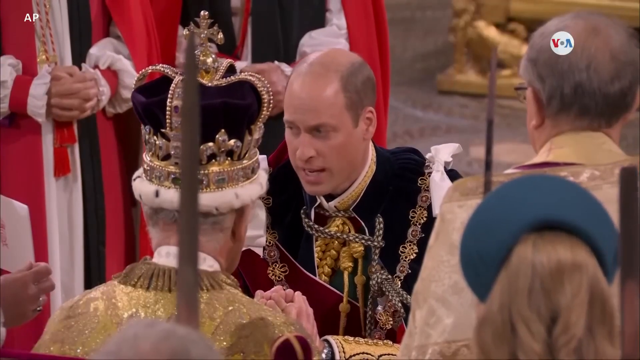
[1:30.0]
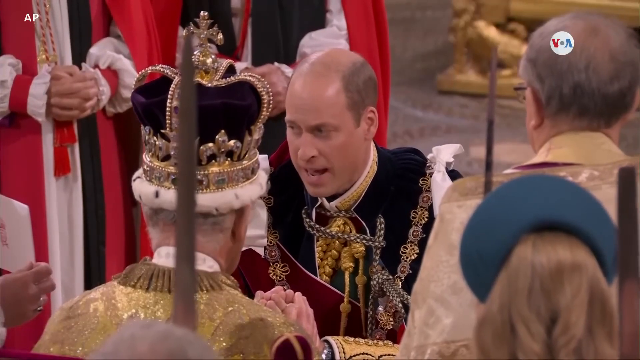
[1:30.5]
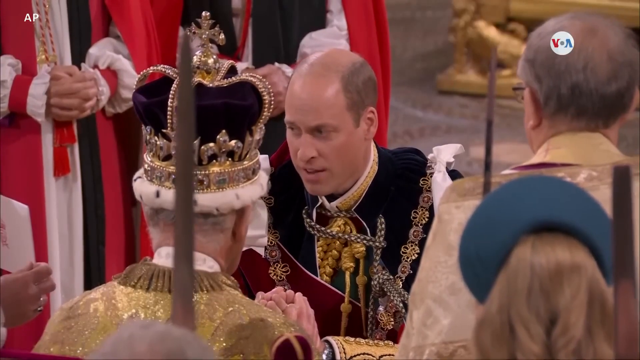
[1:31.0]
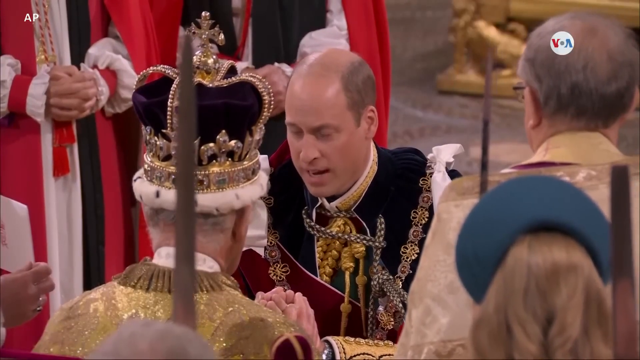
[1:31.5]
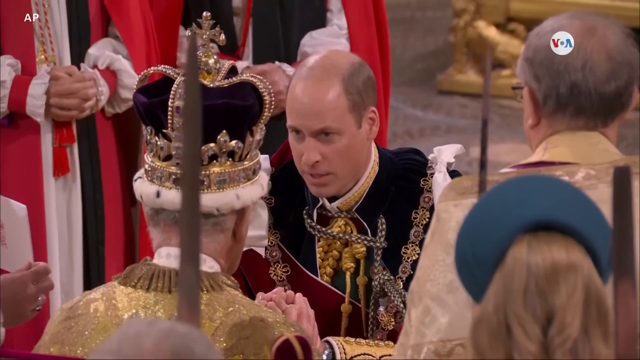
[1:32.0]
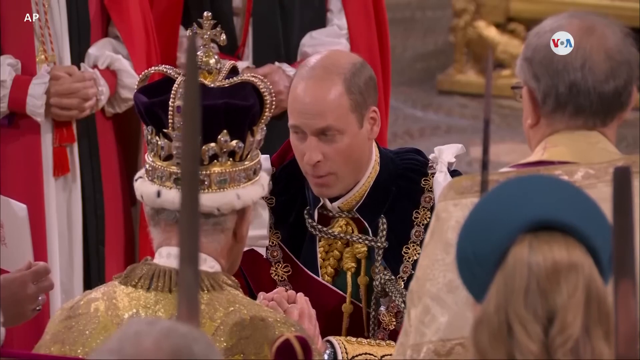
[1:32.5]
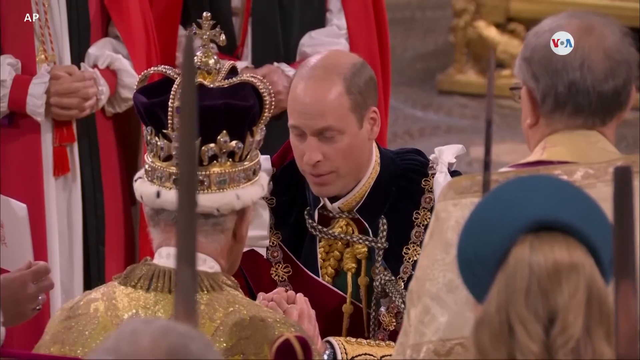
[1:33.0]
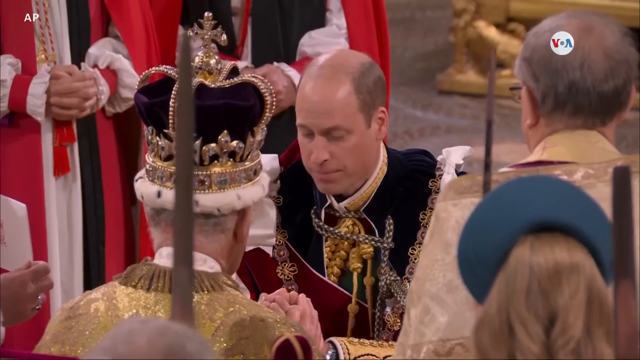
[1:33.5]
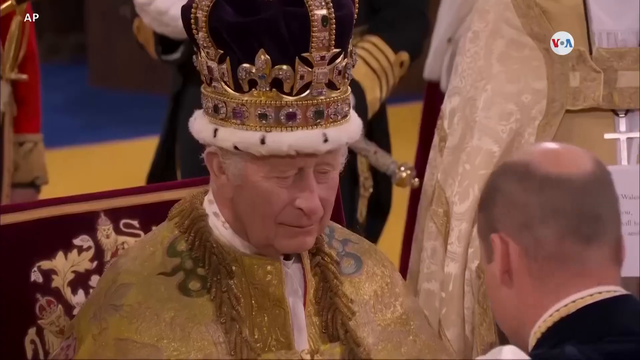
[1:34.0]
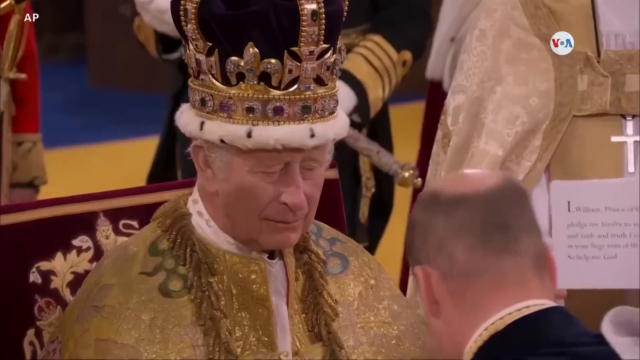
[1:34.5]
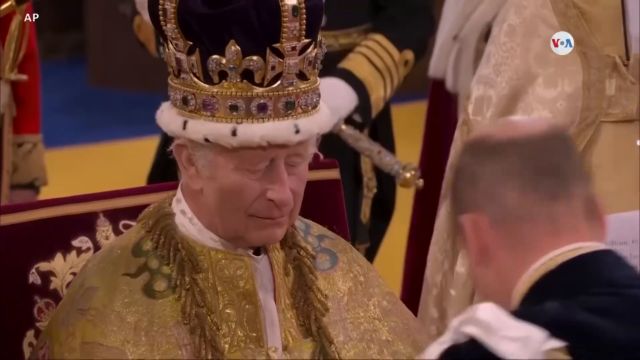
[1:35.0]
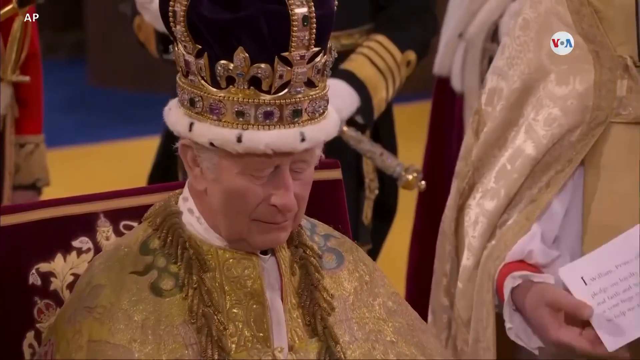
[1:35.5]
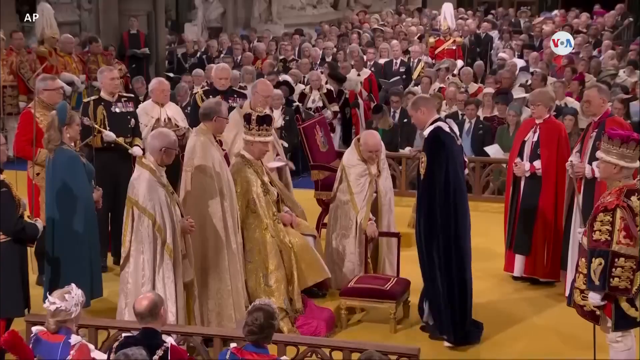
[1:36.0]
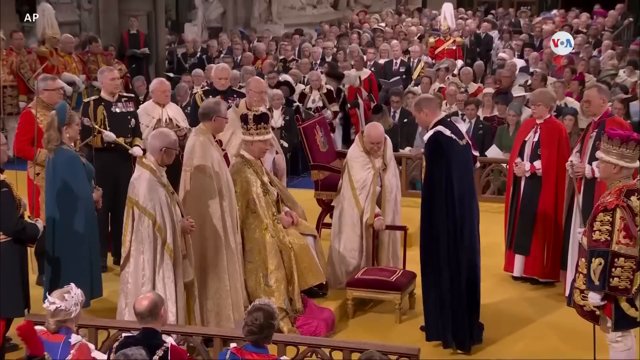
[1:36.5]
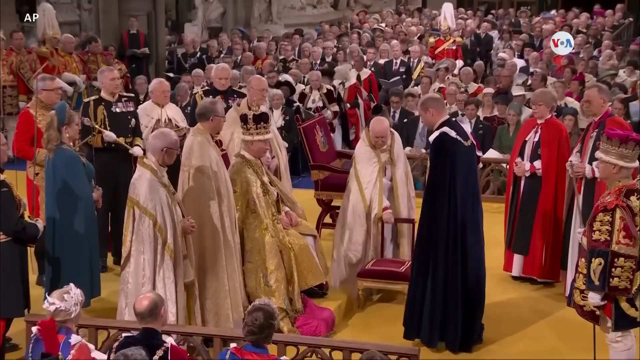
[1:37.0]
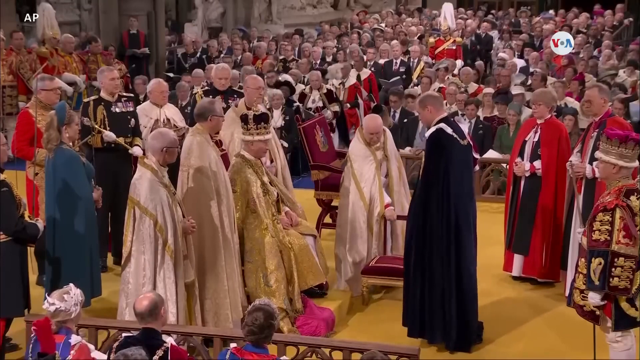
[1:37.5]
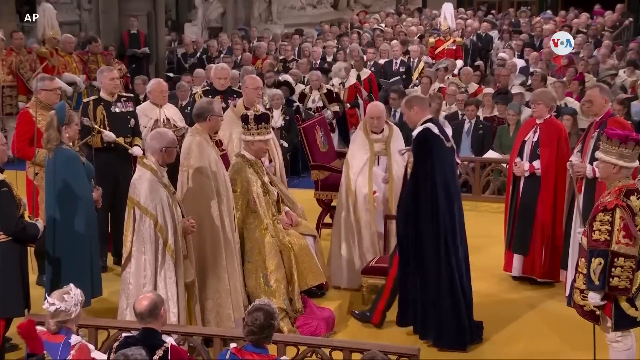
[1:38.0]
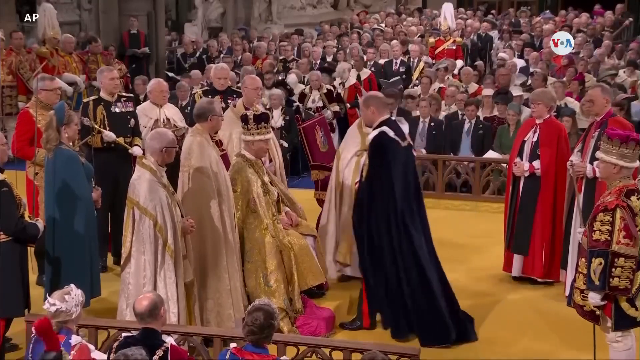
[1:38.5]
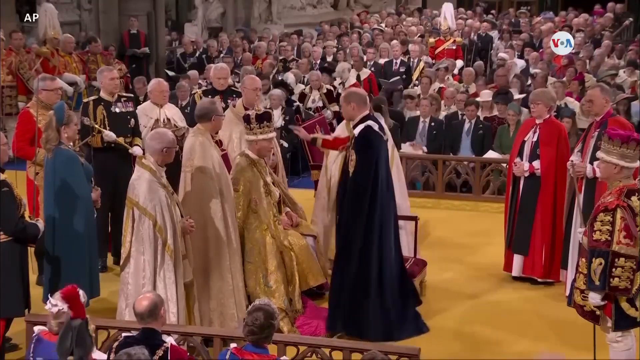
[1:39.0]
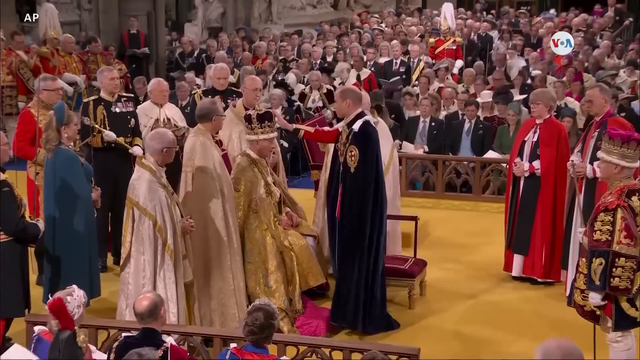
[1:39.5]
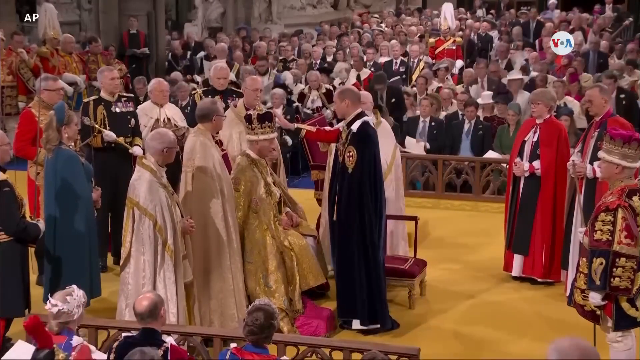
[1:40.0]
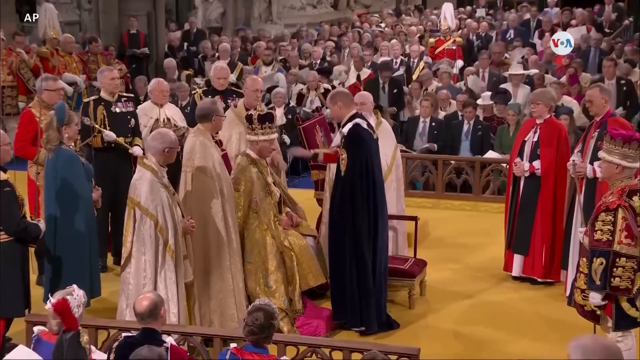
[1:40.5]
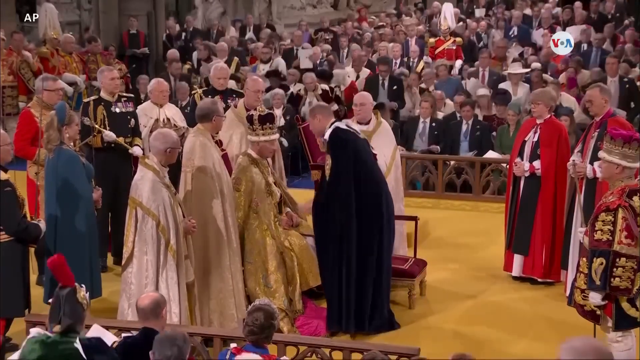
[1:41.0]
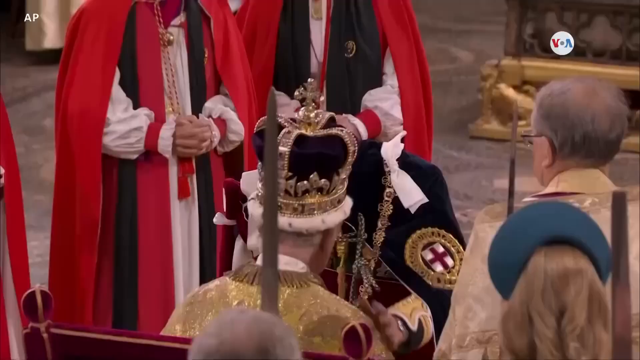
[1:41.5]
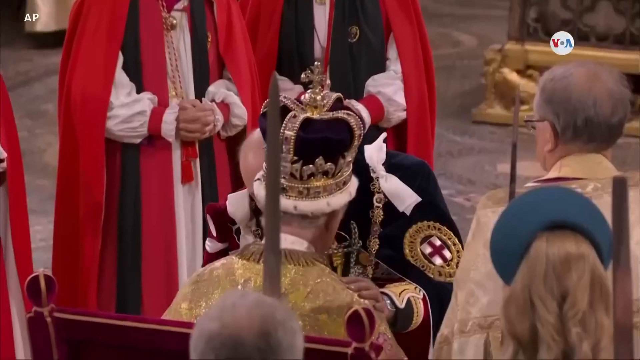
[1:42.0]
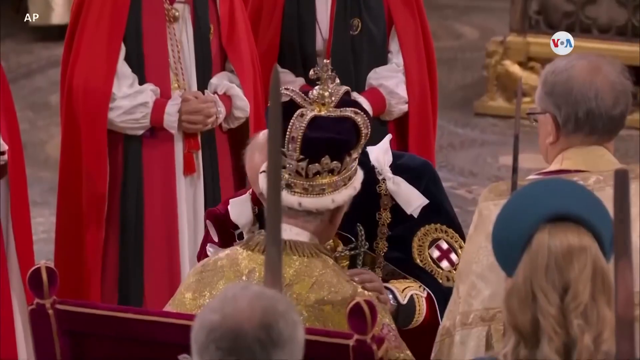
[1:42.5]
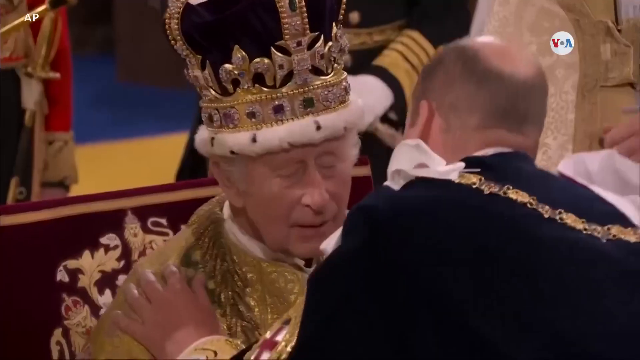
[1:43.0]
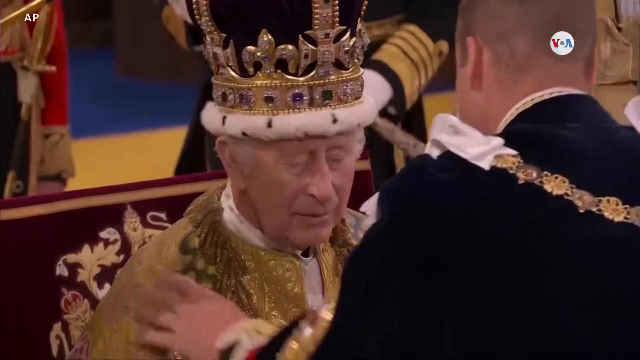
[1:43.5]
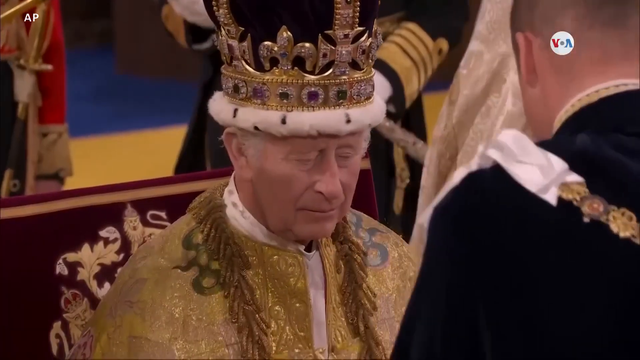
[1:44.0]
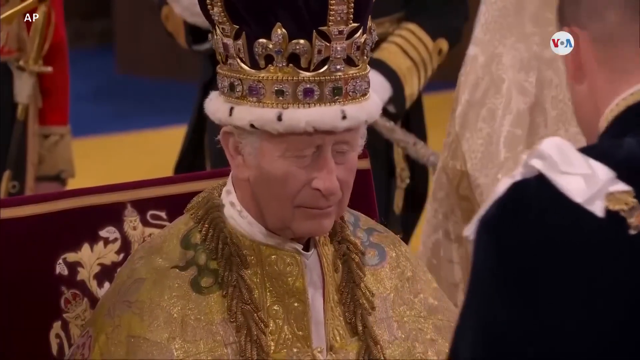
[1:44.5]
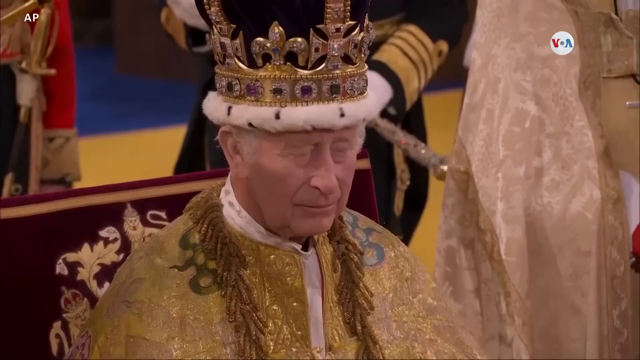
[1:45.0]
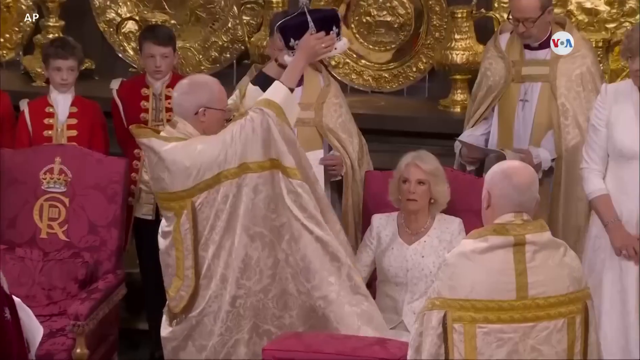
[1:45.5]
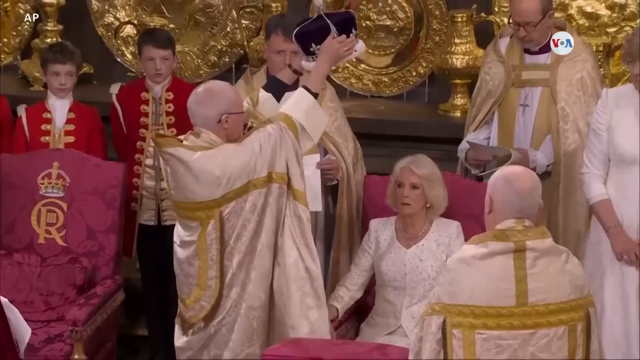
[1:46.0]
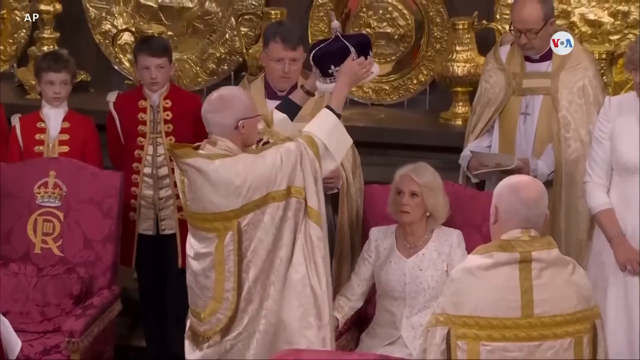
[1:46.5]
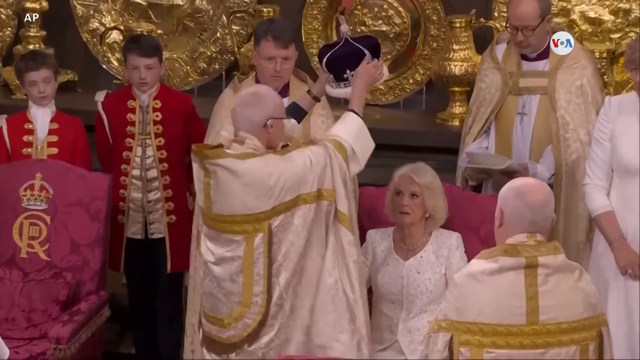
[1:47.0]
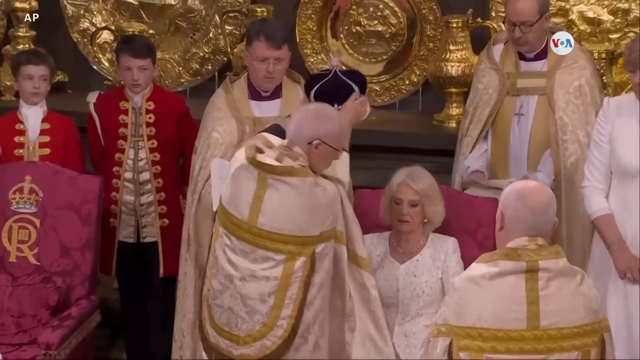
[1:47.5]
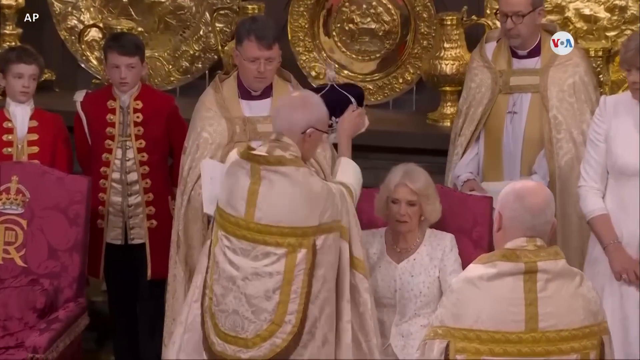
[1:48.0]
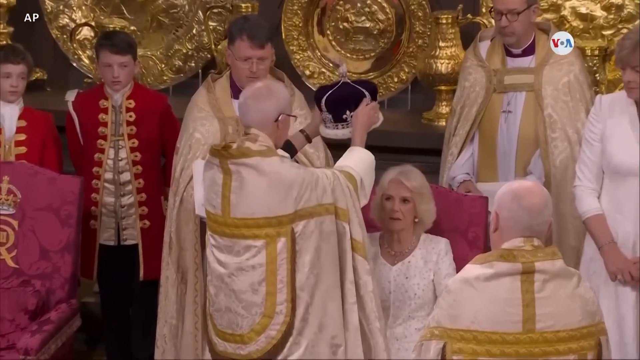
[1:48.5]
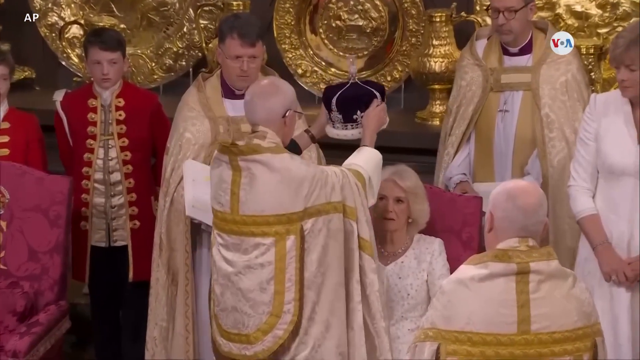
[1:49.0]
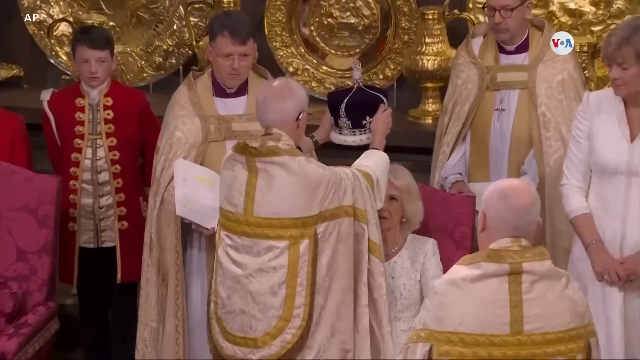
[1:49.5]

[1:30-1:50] A medium close-up shows Prince William face on, with his father in front of him with his back to the camera. King Charles wears a crown, purple with gold around it and a white trim. William looks slightly to the right of his father, and a white card held up can just be made out in the frame; he reads from it, perhaps an oath or declaration. The video cuts to Charles facing the camera, with the camera slightly to the left; he looks solemn and thoughtful. William stands up, and in a medium shot the King is seated, though it is unclear whether on a throne or a seat. William, in a navy blue cloak, raises his right hand and places it on the crown, revealing a red suit underneath. The guests in the hall suddenly rise as he makes this gesture, and in close-up William leans in and kisses his father's right cheek, then takes a step back. A medium shot then shows Queen Camilla, King Charles' wife, seated in a pink seat, perhaps a throne. In front of her are two men in white cloaks with gold trim. Behind her are two more men in a similar uniform, with a cloak, a white top and purple around their necks, wearing crucifixes. Behind them, very big gold plates and bowls decorate the scene. Two boys dressed in red are to the Queen's right, just behind her shoulder. A man raises a crown, purple with a sort of silver decoration, and is about to place it on Camilla's head.